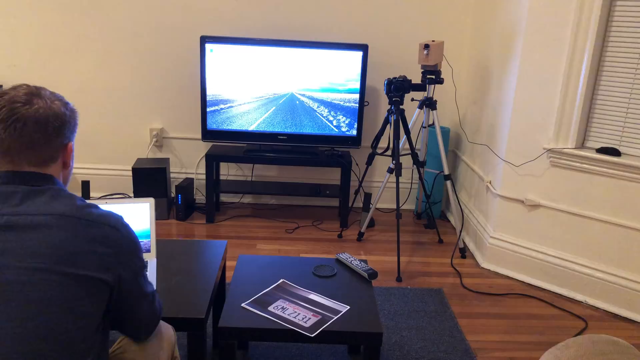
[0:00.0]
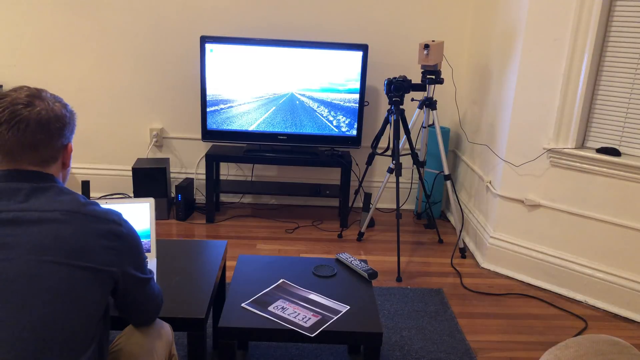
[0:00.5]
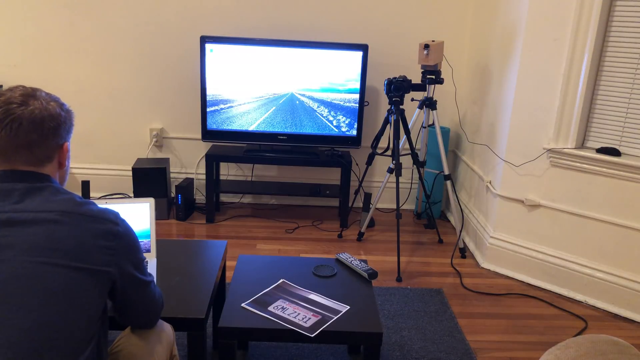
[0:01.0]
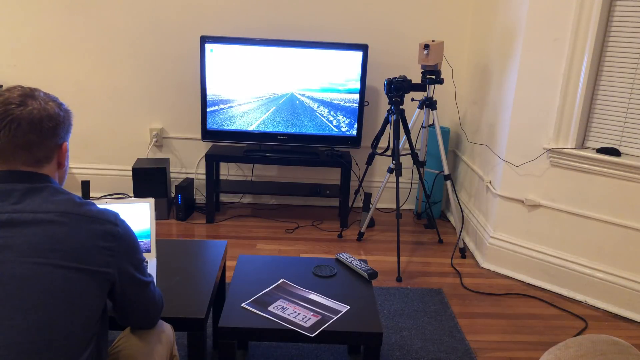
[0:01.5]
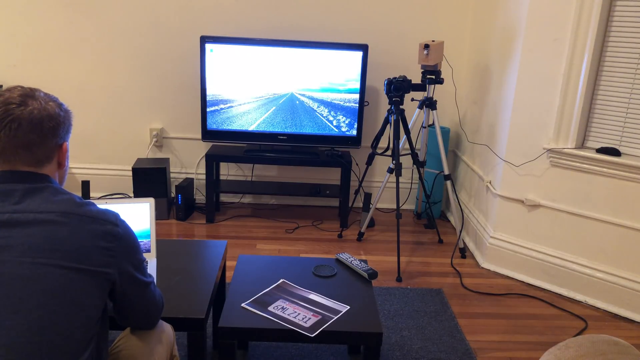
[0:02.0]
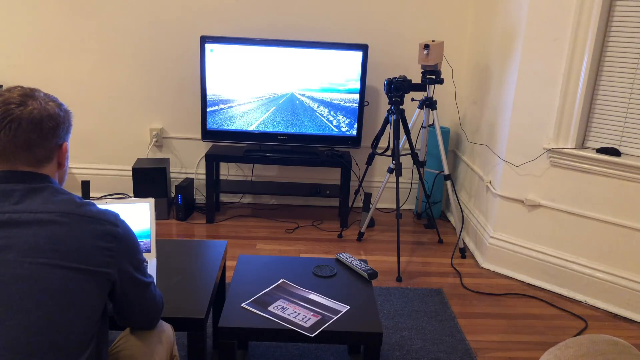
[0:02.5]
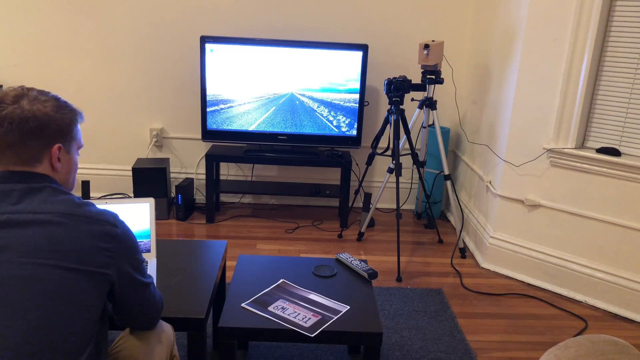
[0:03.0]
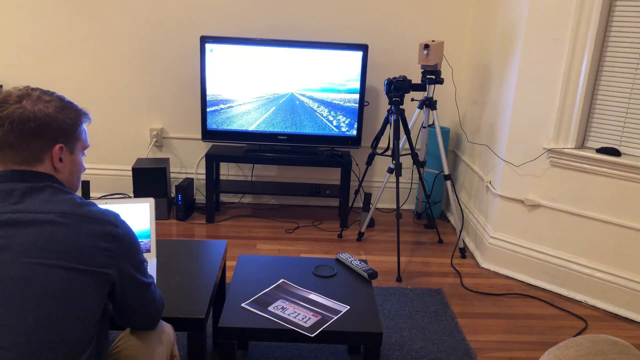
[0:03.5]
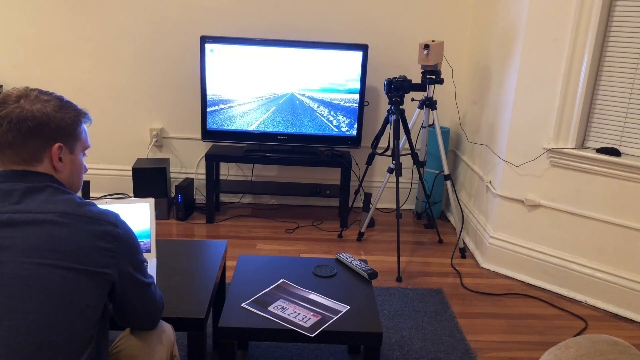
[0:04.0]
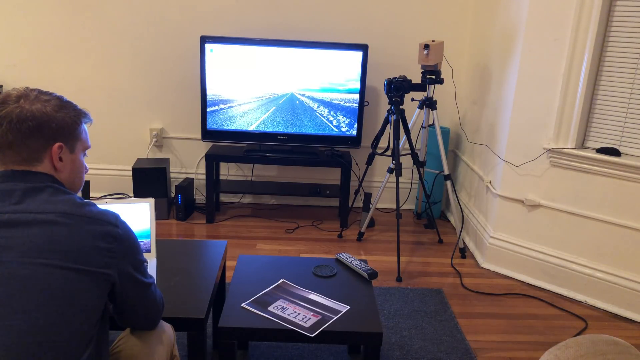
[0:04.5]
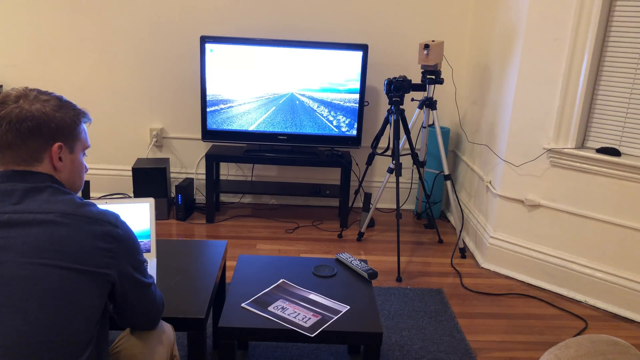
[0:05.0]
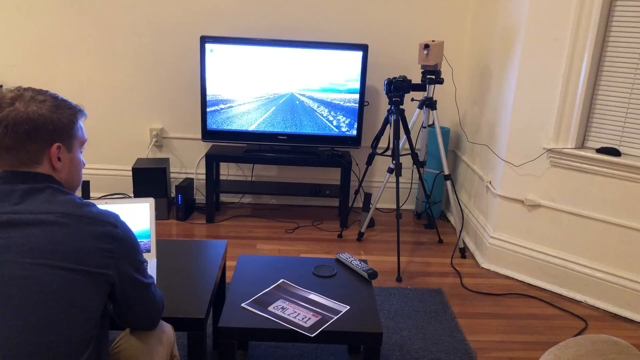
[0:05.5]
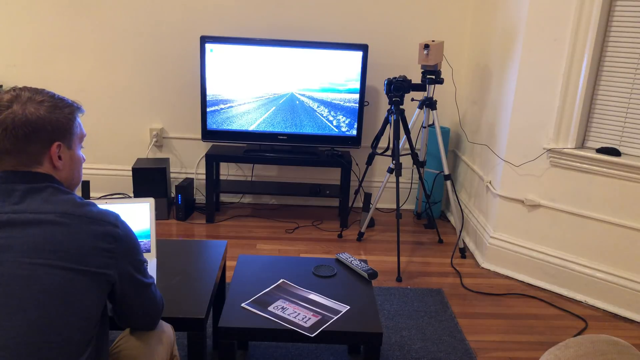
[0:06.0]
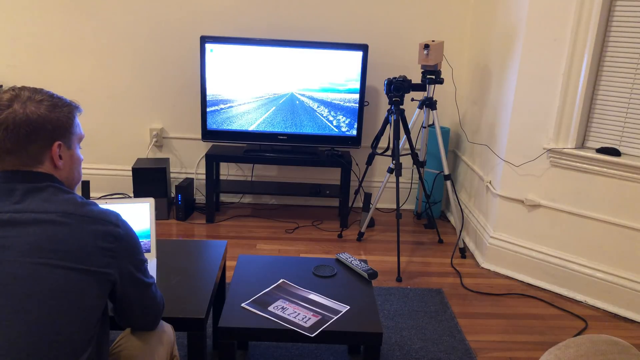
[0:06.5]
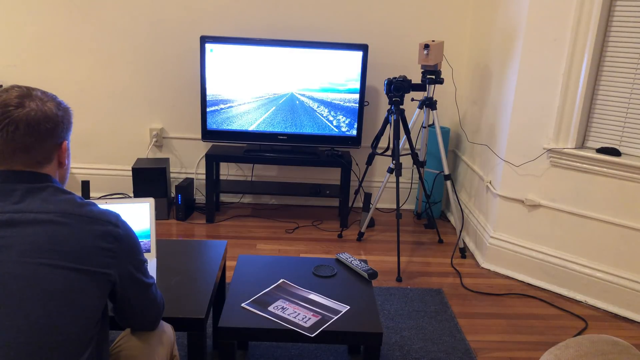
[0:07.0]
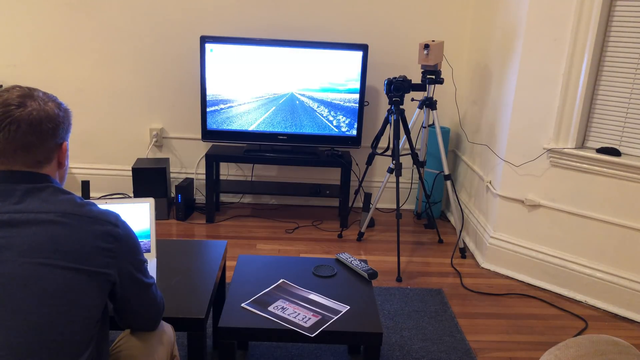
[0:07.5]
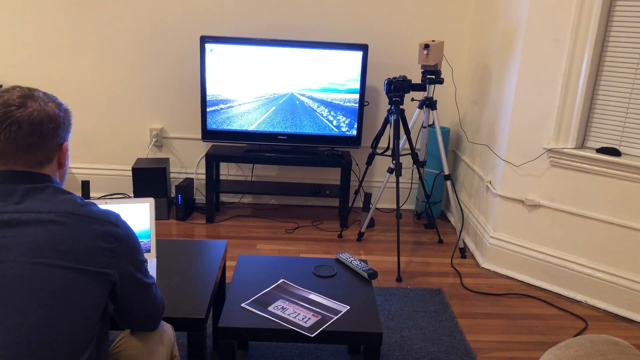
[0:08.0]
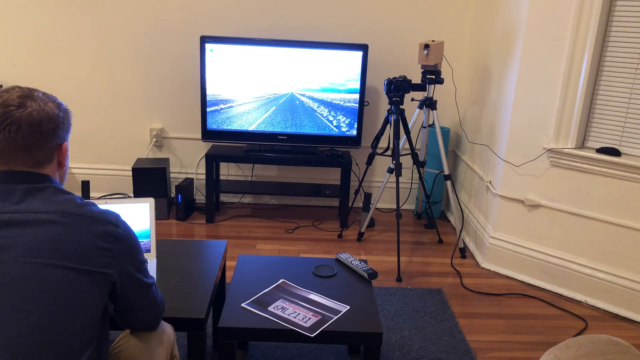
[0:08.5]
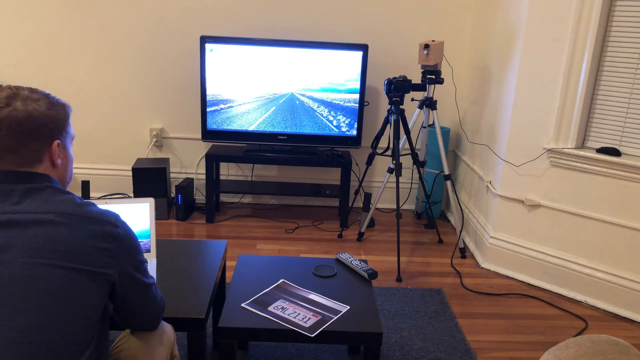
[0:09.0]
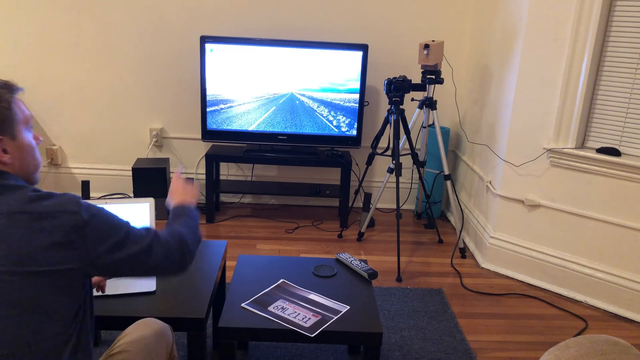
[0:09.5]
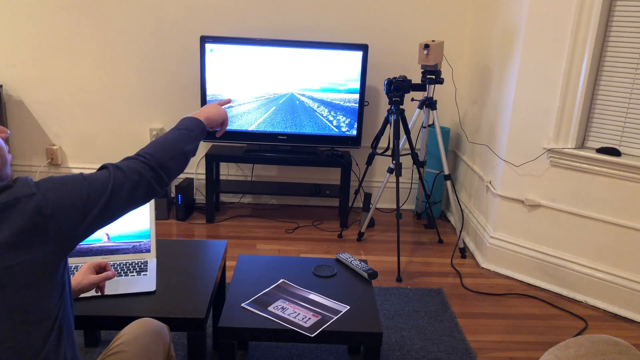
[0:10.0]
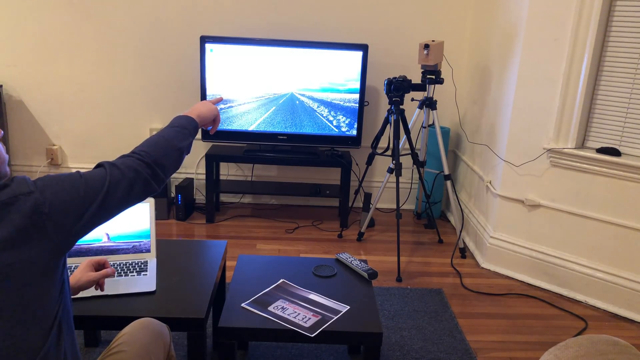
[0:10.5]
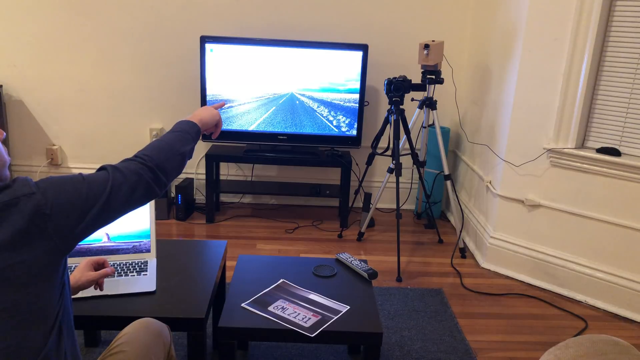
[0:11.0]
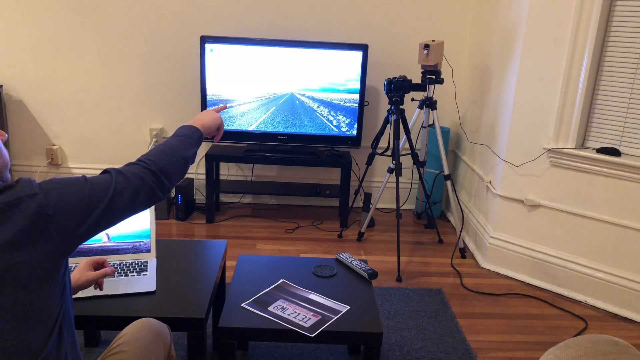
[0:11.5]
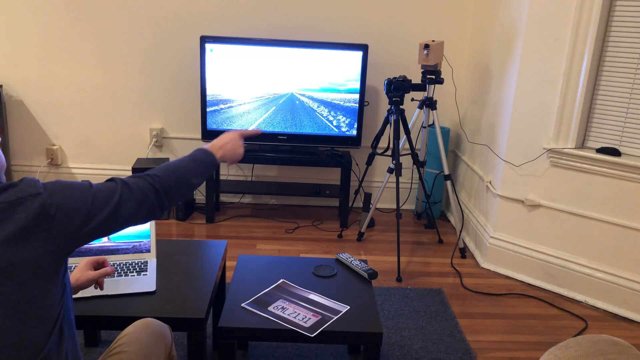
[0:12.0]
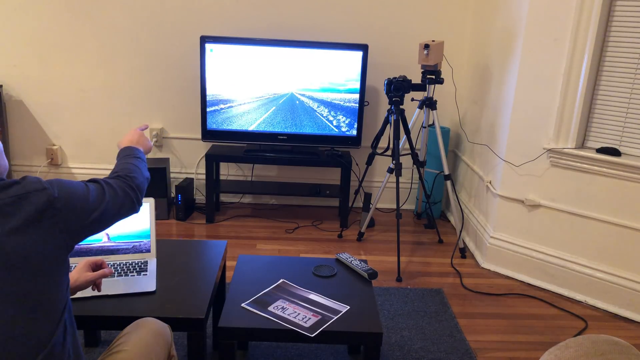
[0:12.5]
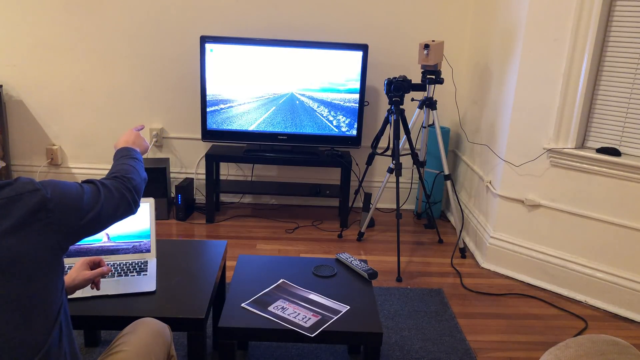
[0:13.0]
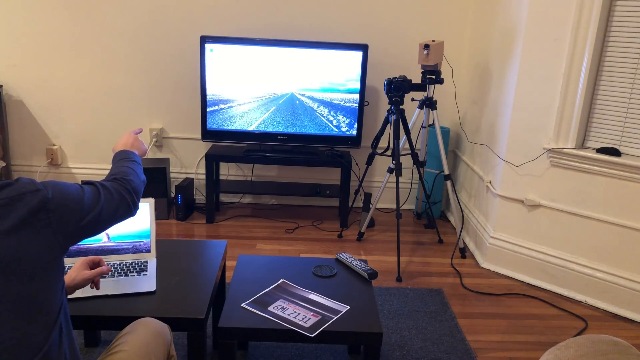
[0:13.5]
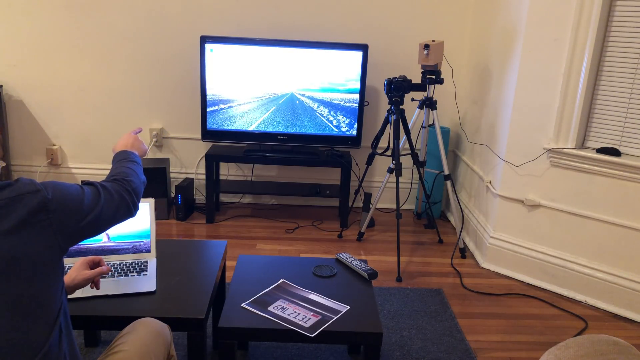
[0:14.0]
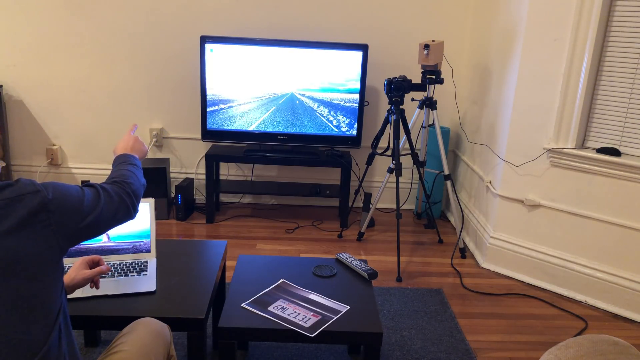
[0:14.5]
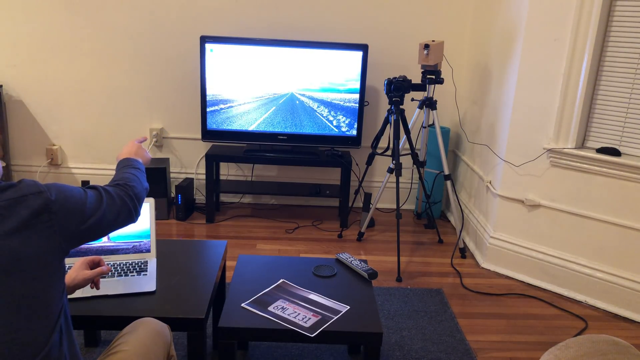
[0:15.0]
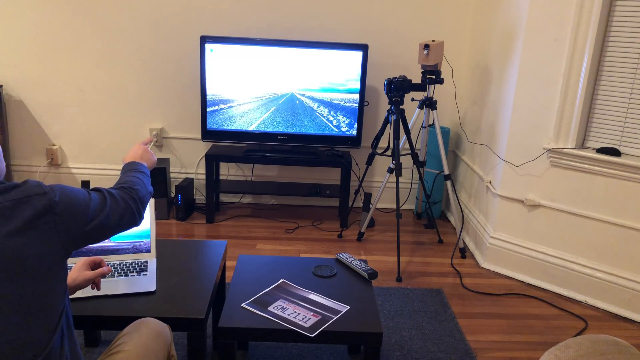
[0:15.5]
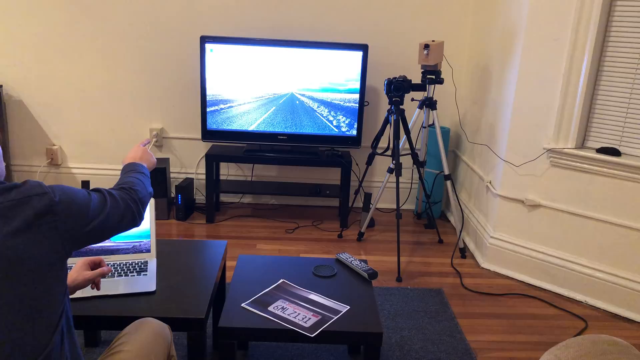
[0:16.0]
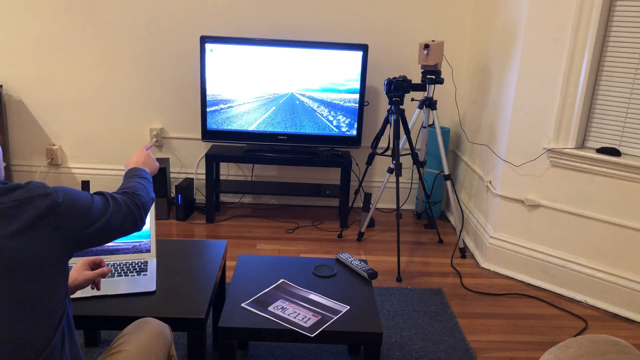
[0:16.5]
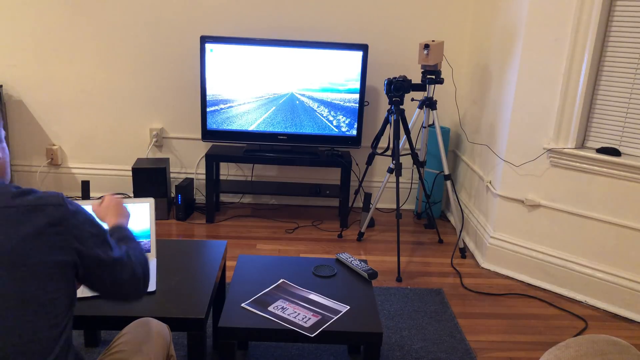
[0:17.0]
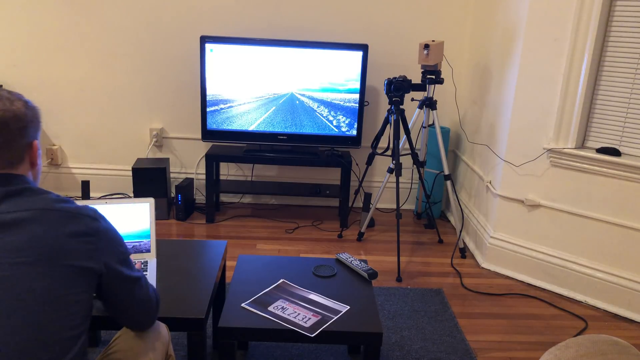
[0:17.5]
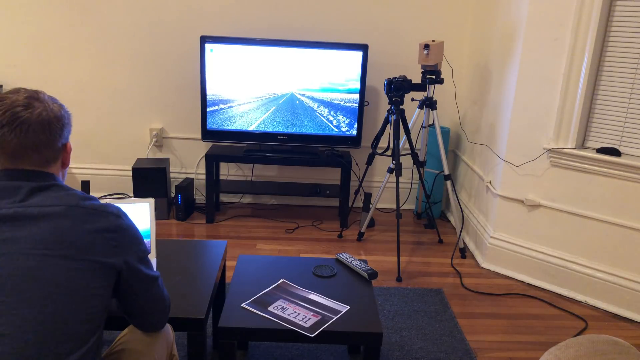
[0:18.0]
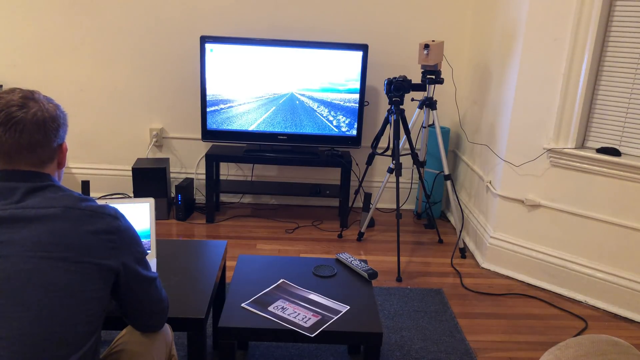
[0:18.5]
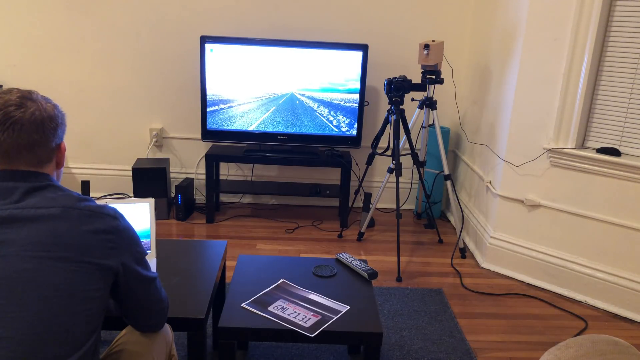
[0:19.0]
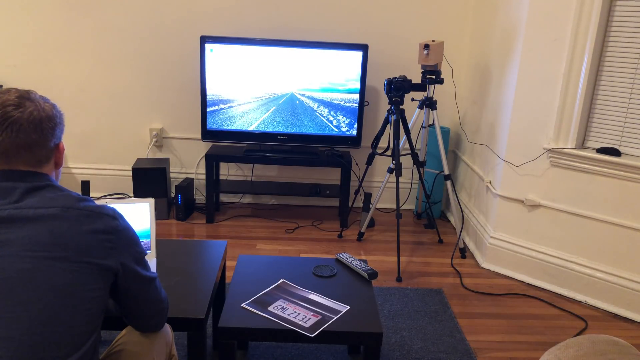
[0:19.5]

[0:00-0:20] The scene is set in a living room with a TV and at least two cameras set up in the corner; there are two tripods in the corner. A white man seems to be on a laptop, and the setup is possibly a security system. On the main screen of the TV there looks to be a road. On his coffee table there seems to be a printout of a license plate. The coffee table is black and looks like it is in three separate pieces that step up from one another, so they are not all the same height. The wiring is covered in white paint, and the apartment appears to be older. The room also seems to have a bay window, with venetian blinds in the windows.